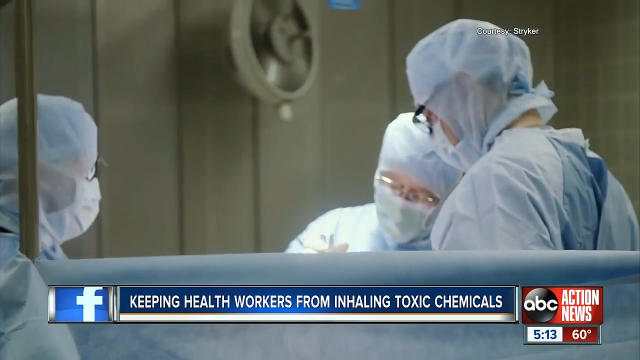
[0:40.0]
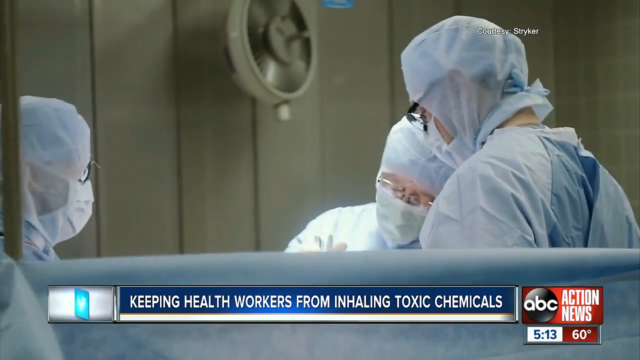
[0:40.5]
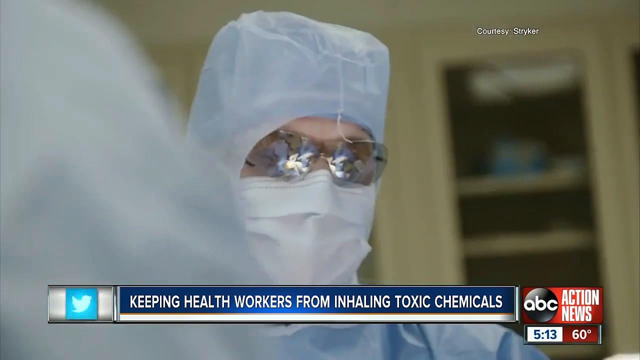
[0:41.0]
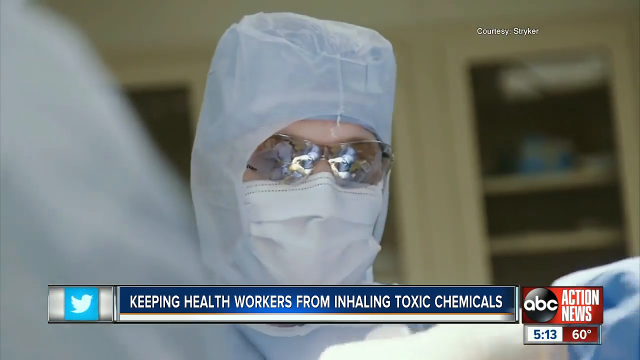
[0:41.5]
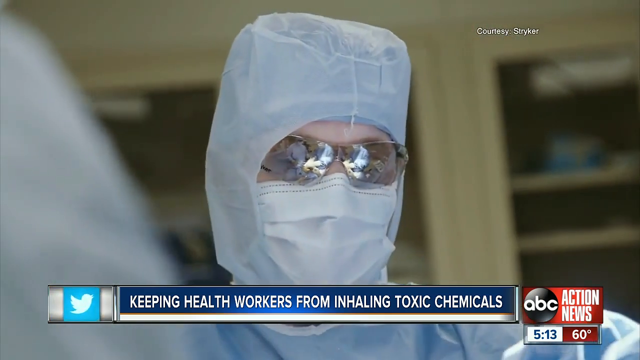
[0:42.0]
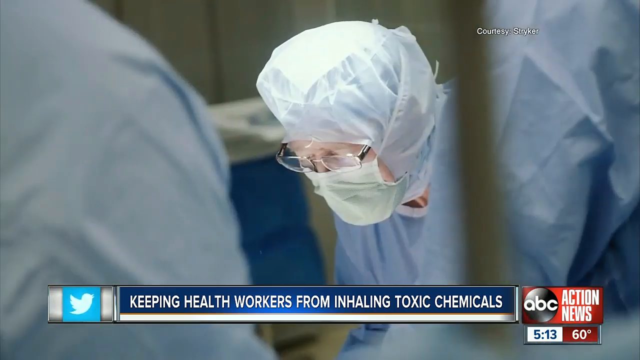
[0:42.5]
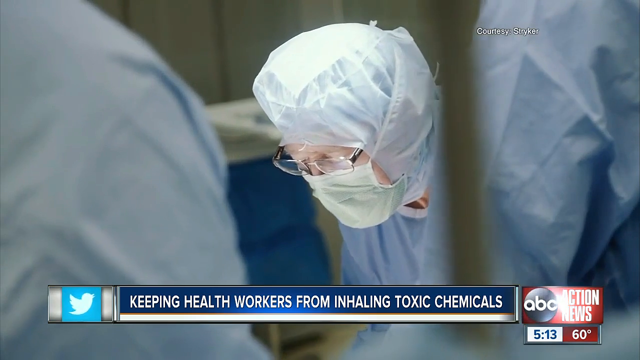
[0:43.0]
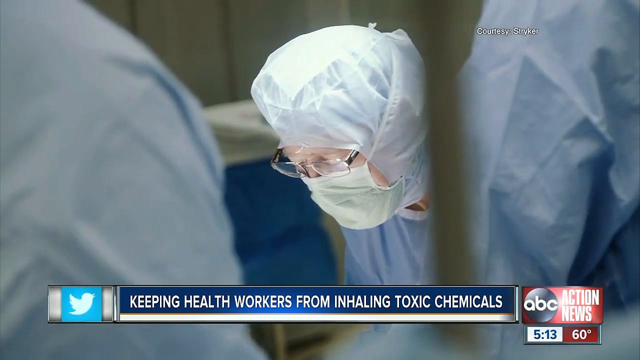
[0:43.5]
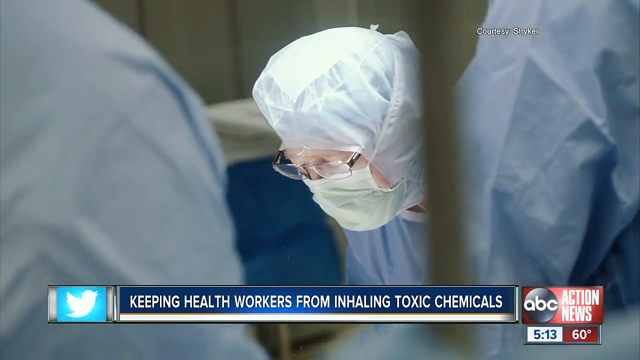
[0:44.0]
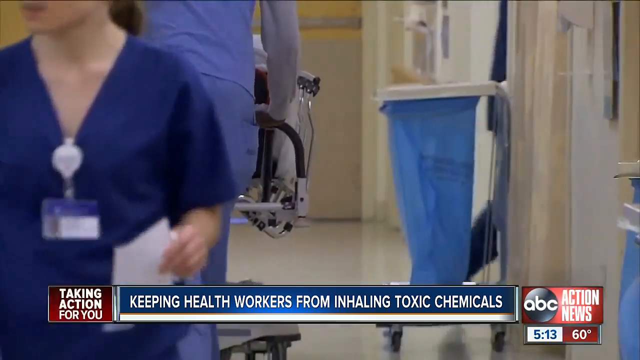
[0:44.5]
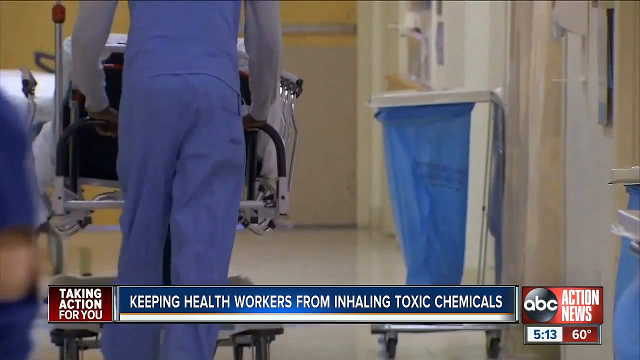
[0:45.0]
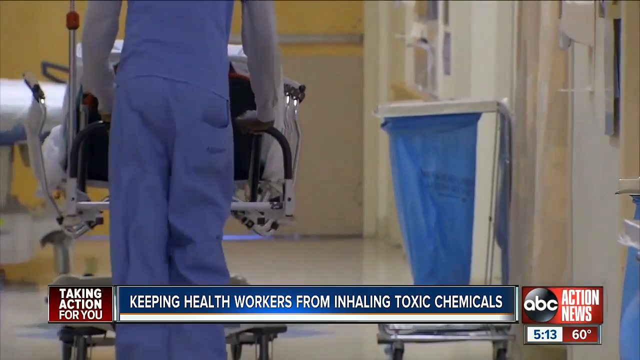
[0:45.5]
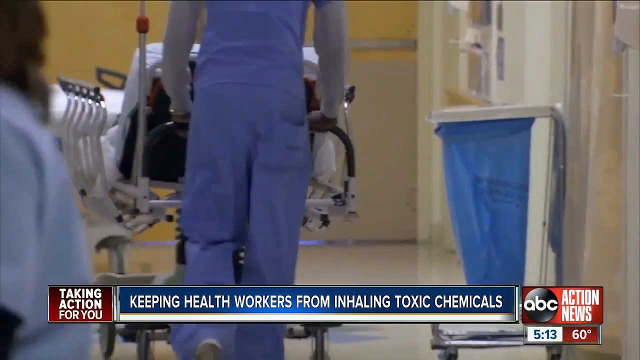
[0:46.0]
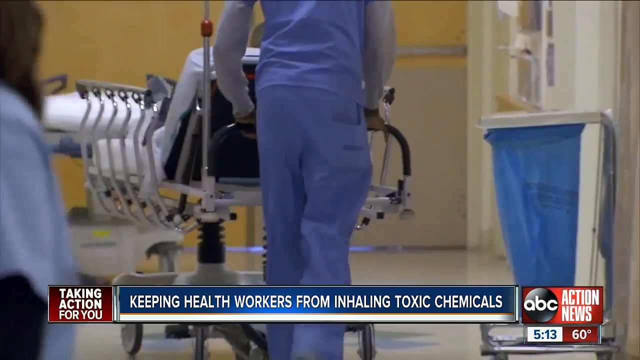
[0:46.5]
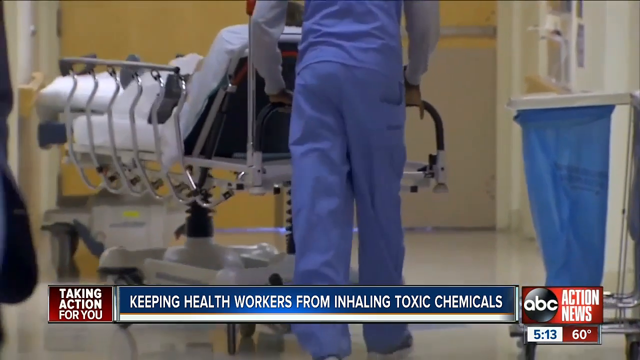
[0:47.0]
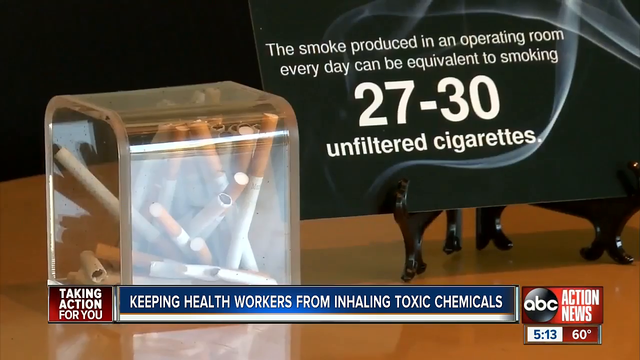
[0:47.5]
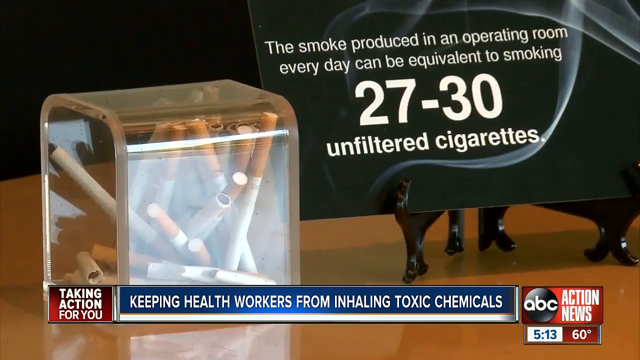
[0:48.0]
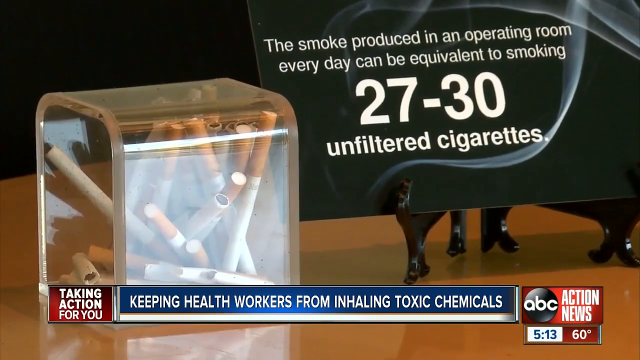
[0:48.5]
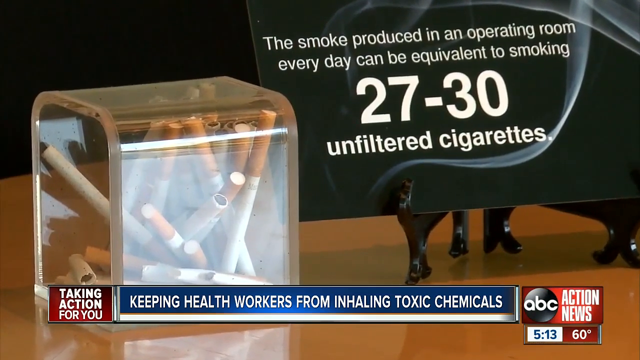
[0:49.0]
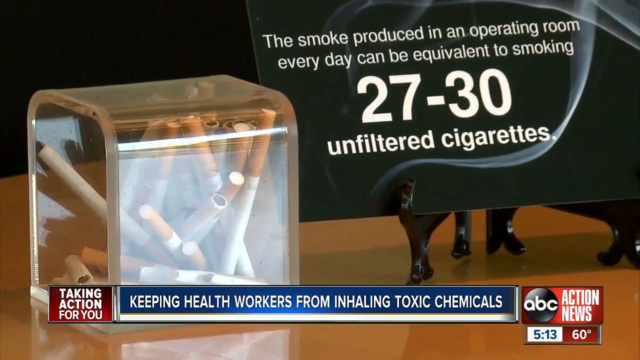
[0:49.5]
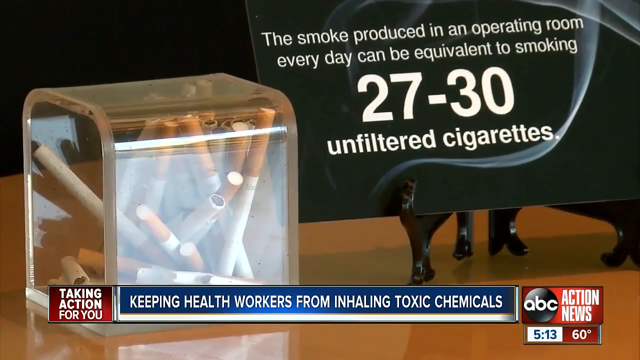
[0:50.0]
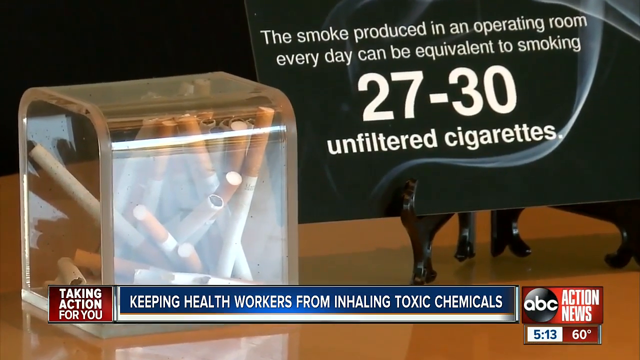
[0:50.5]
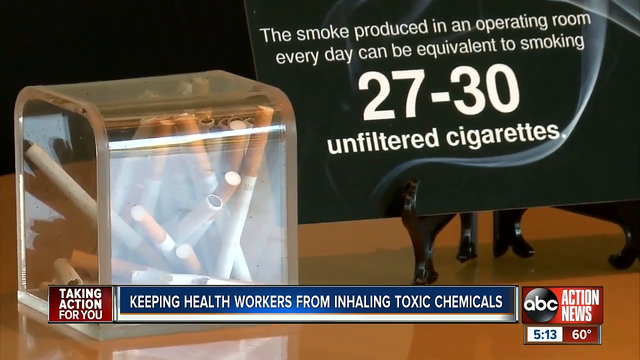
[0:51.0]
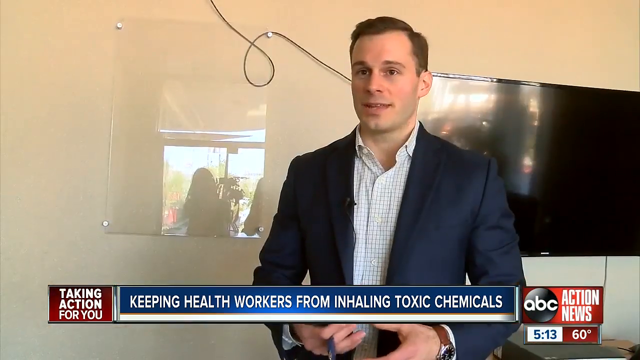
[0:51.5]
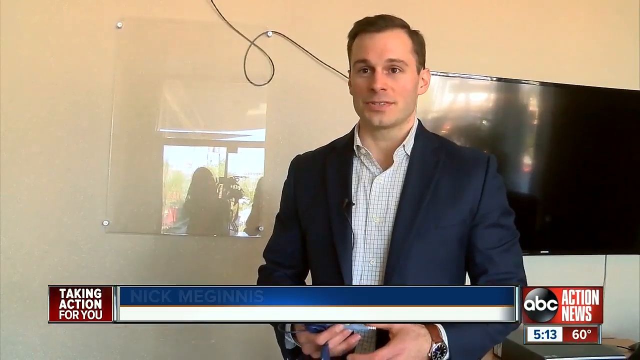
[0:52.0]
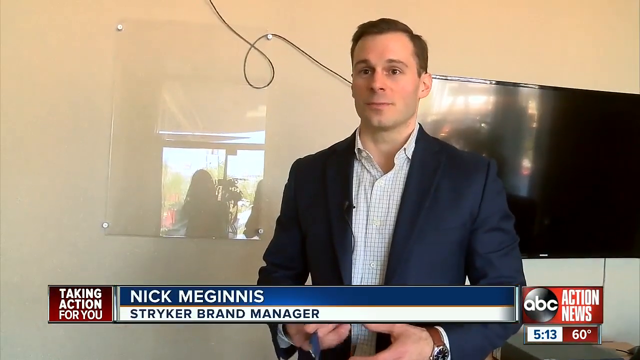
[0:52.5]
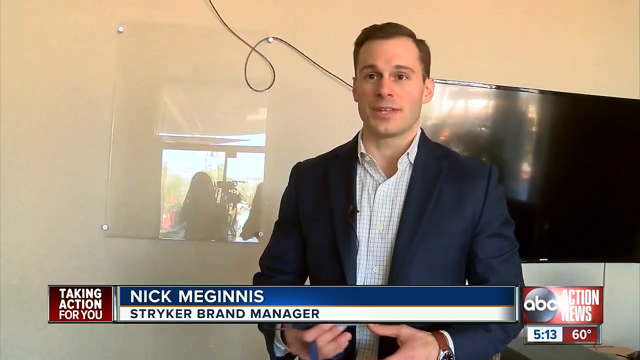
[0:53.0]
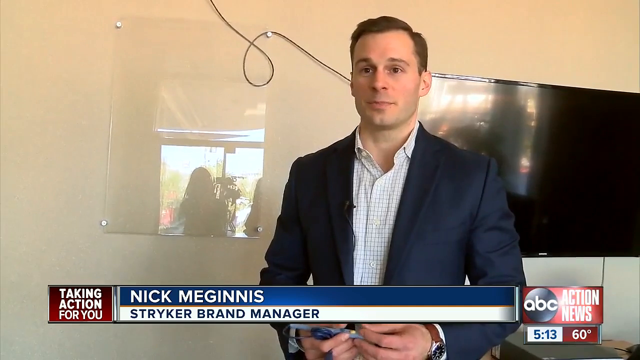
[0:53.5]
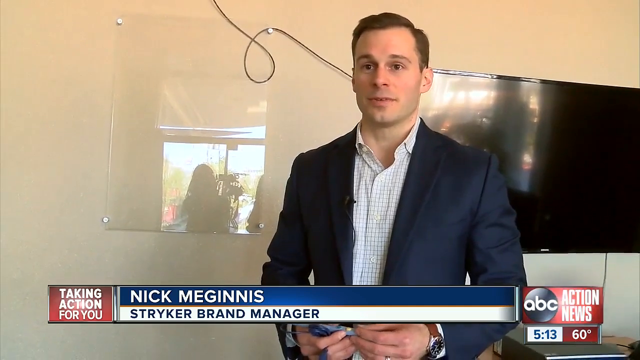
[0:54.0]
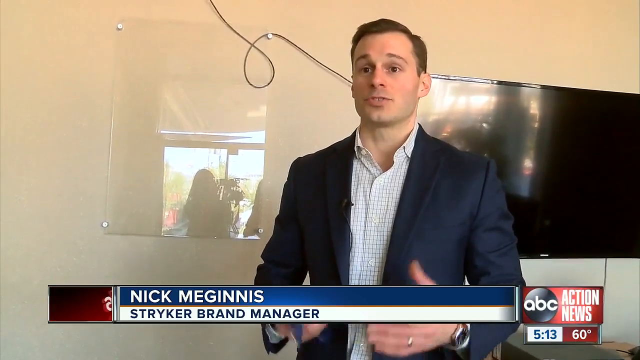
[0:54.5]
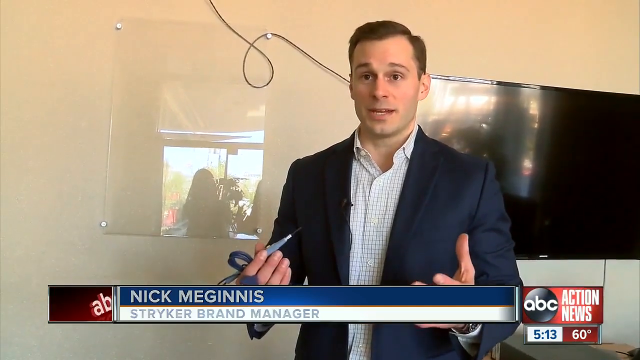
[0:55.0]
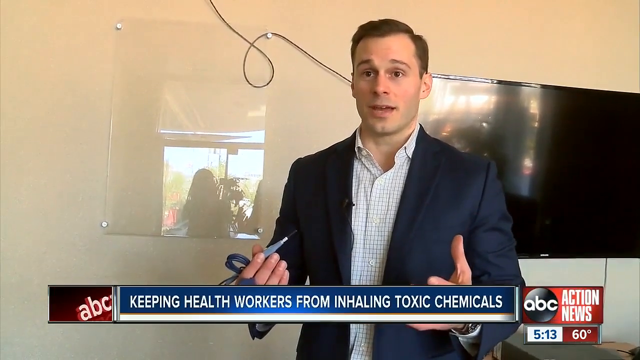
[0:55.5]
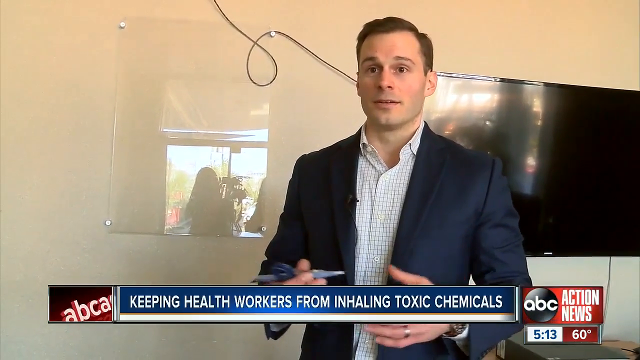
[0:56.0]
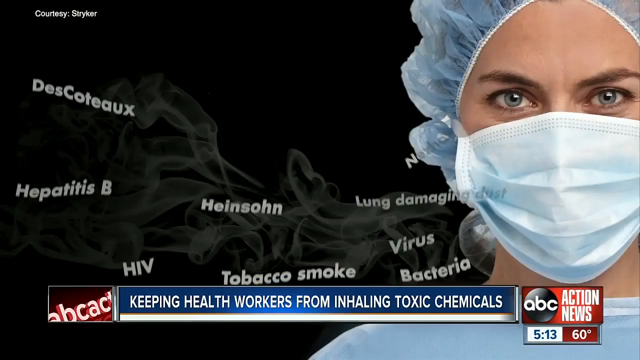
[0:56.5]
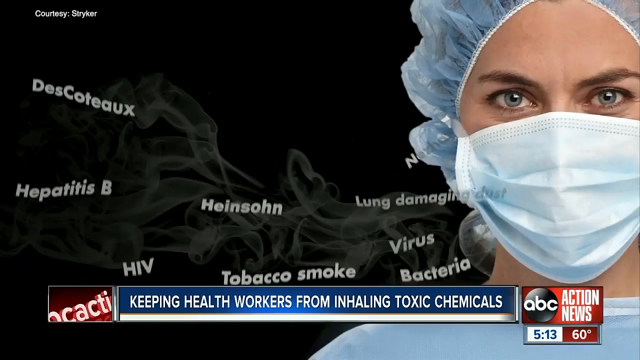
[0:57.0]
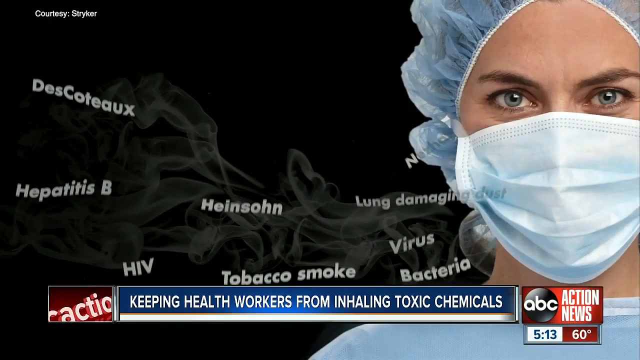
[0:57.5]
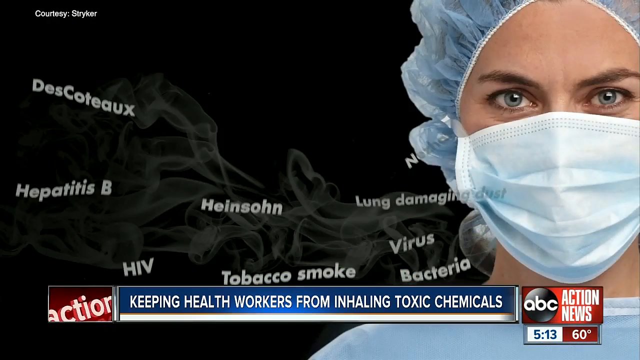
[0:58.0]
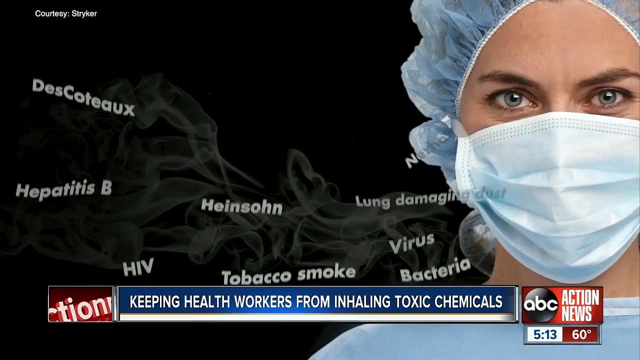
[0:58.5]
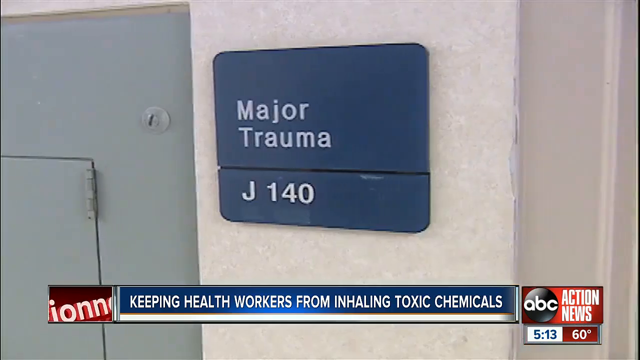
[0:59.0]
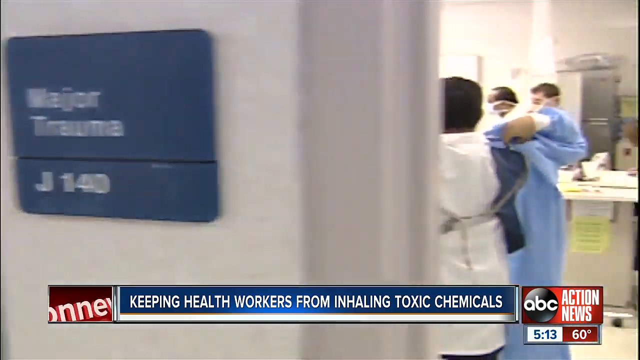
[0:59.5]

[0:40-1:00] In the hospital, doctors wear blue gowns, blue helmets and face masks, and one doctor wears spectacles as they attend to a patient. In a ward, a nurse walks and another nurse in a blue uniform pushes a stretcher bed carrying a patient. A pack of cigarettes on a table pops up with the text "The smoke produced in an operating room every day can be equivalent to smoking 27 to 30 unfiltered cigarettes." A white man in his late 40s then talks to the camera against a cream-colored background, with a black TV that is switched off on the right side. He wears a black suit and a white shirt and gestures with his hands as he speaks. He is identified as Mick Miggins, a brands manager. Behind him a snippet pops up showing a white woman wearing a mask and a blue hat; behind her are written "Hepatitis B, HIV, tobacco smoke, virus, bacteria." The hospital is shown with many patients and doctors inside.